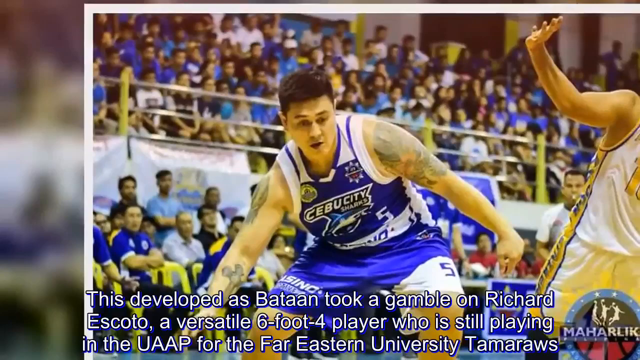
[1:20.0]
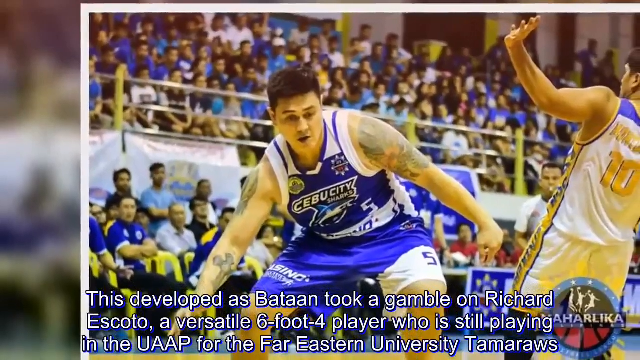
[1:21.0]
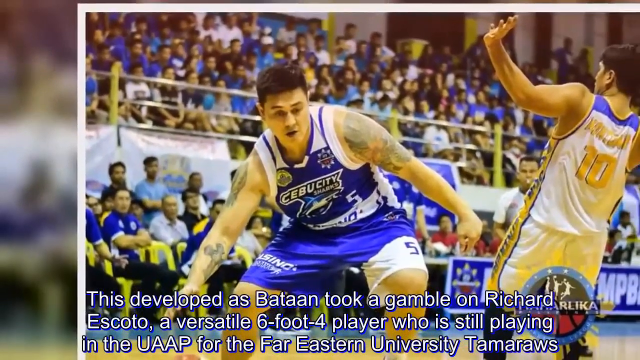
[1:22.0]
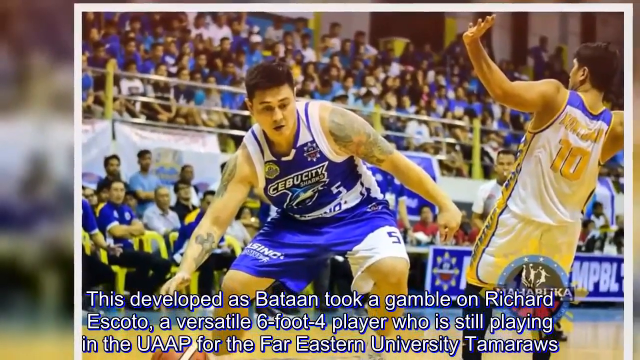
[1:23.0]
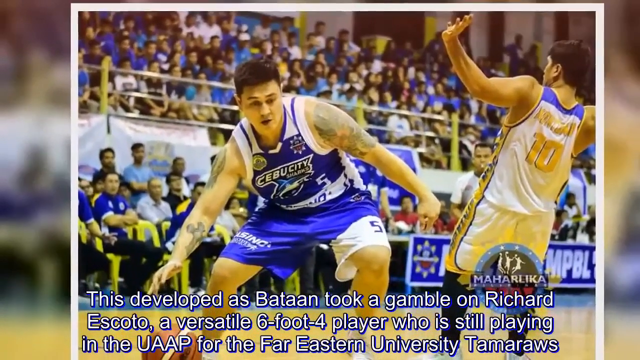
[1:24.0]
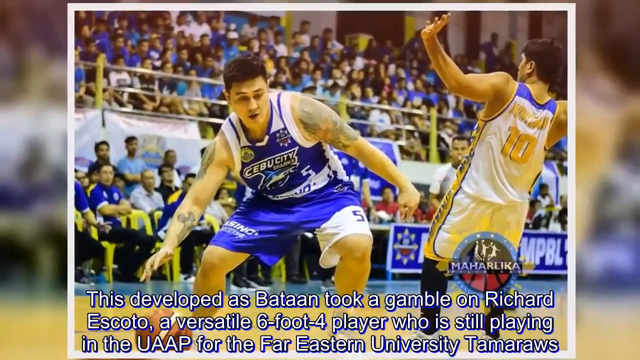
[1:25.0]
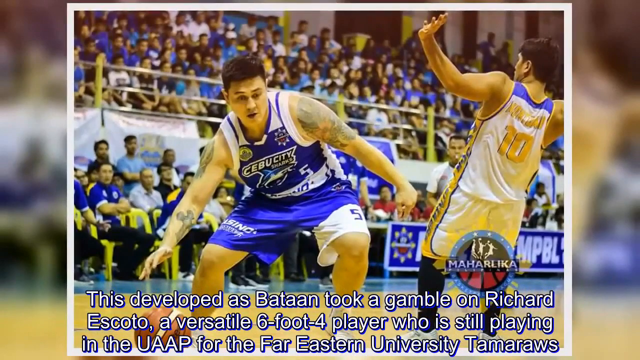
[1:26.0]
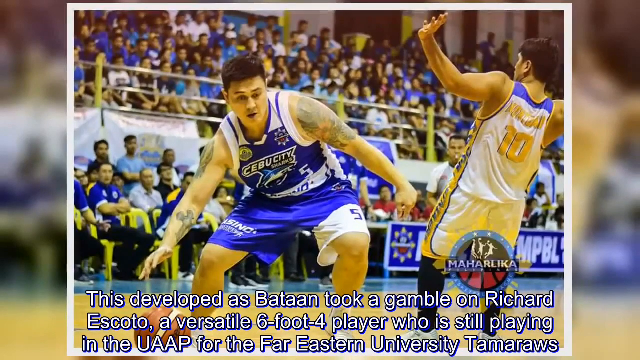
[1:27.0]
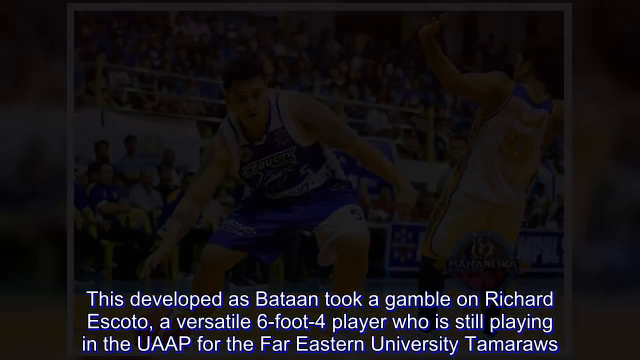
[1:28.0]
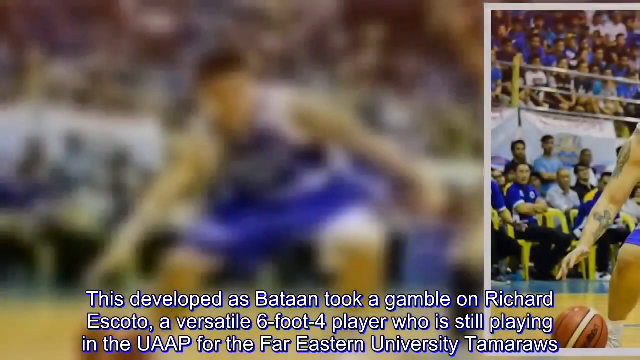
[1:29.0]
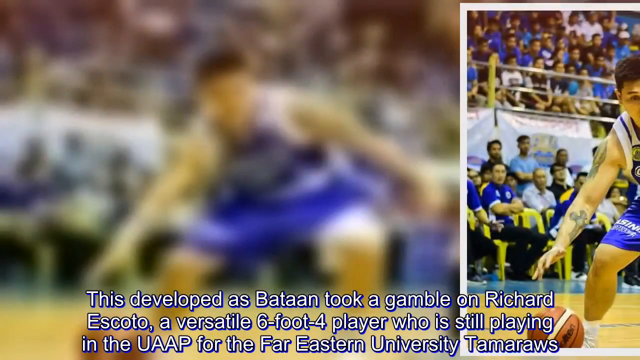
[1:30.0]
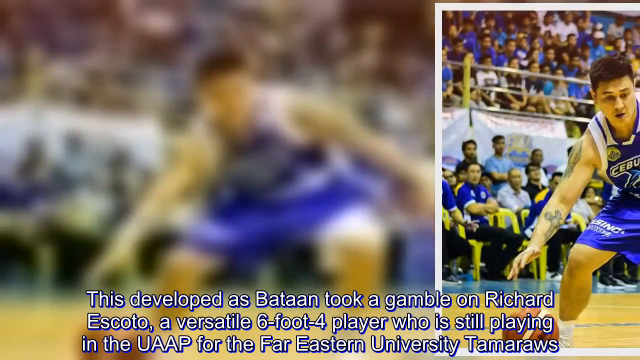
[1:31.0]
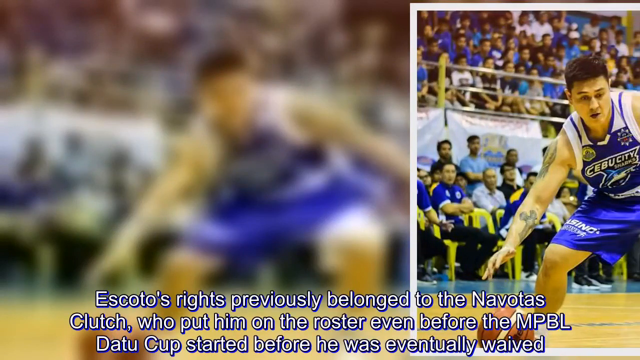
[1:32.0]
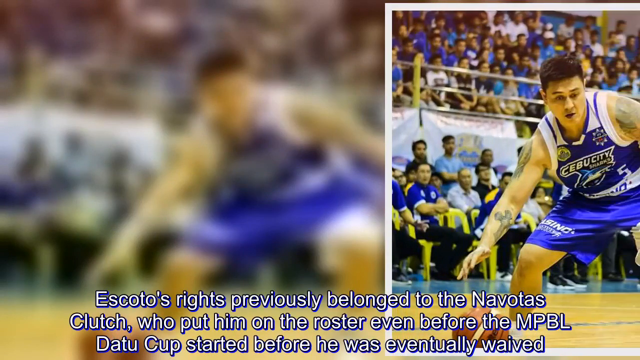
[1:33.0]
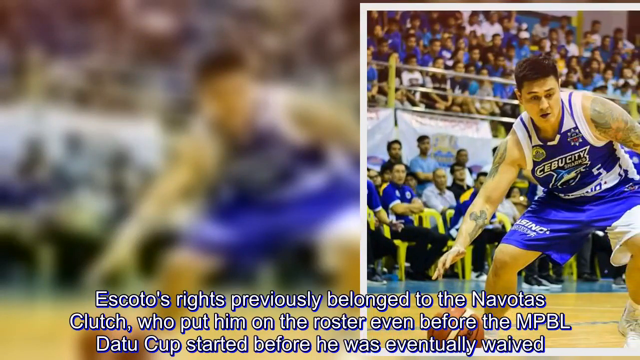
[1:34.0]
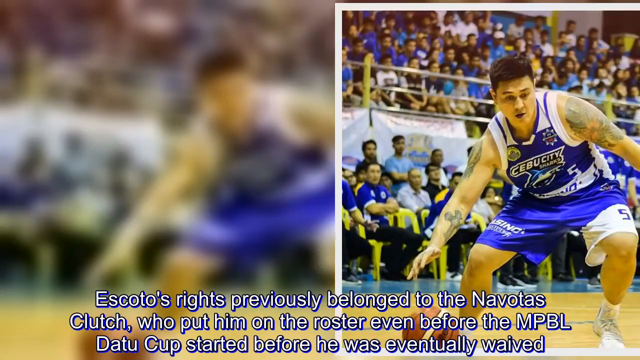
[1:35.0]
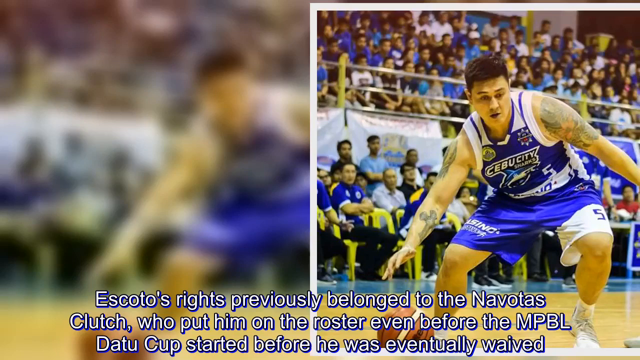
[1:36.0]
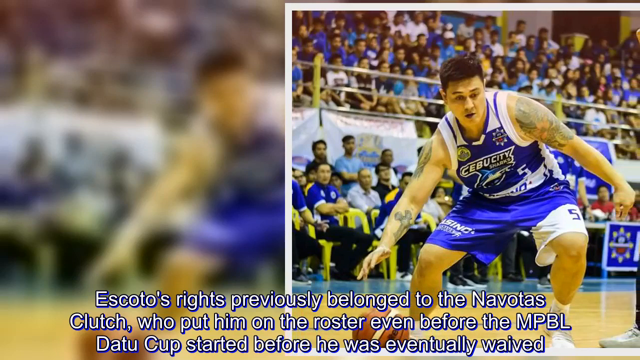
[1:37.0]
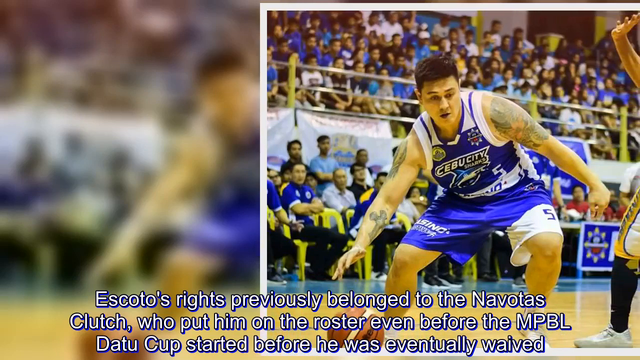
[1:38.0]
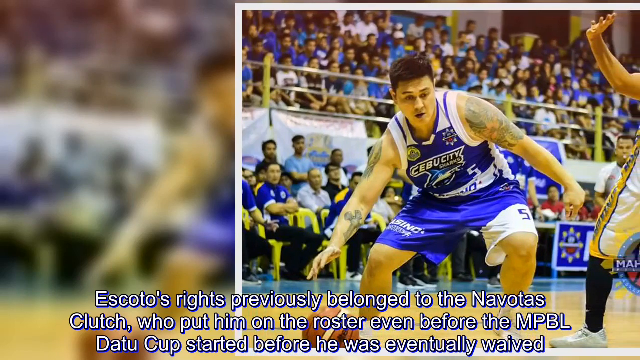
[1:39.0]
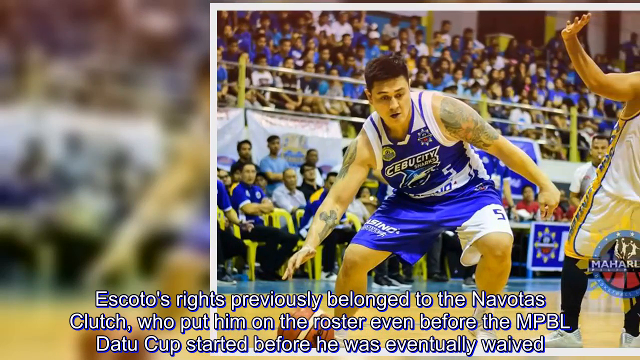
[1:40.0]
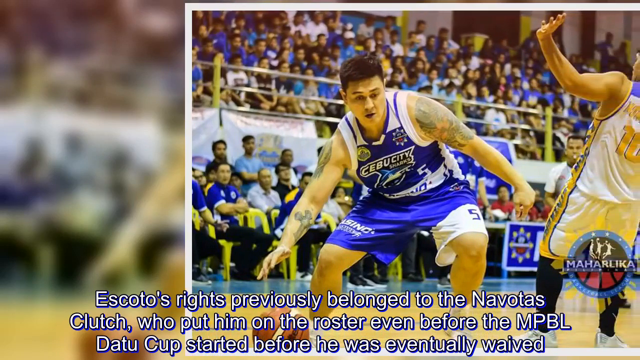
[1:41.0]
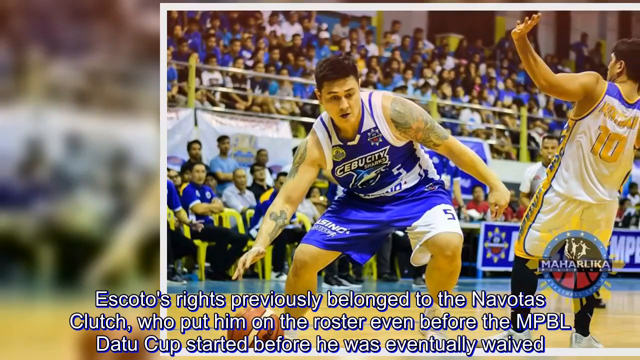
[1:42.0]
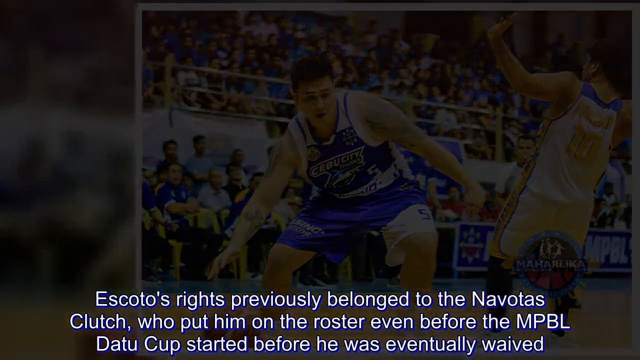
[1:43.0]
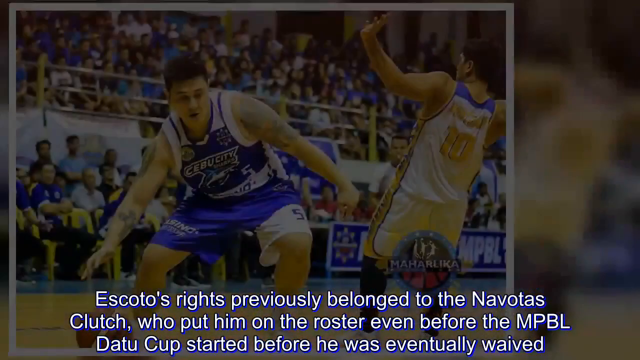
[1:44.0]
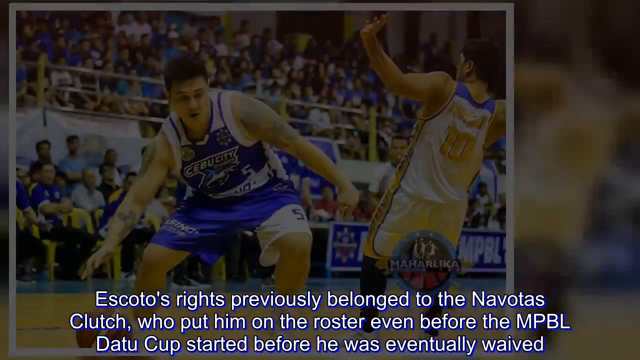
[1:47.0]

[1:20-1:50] The text describes Richard Soto, a versatile 6-foot-5 player, and says Soto's rights previously belonged to another team, which put him on the roster even before a Cup started.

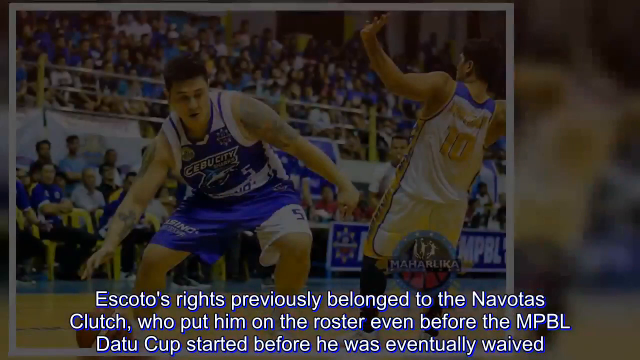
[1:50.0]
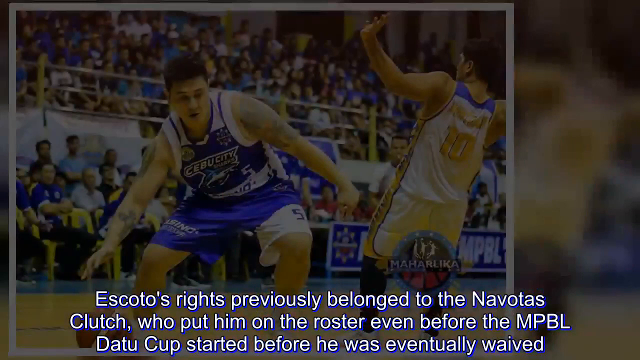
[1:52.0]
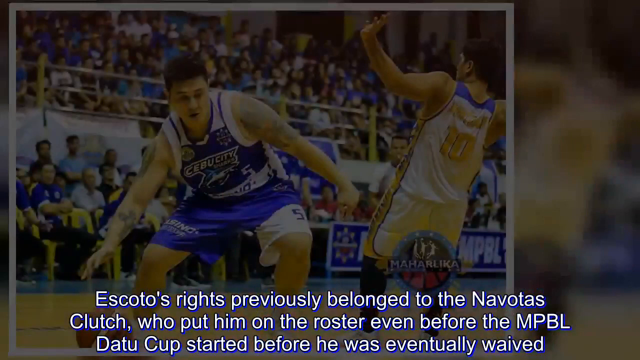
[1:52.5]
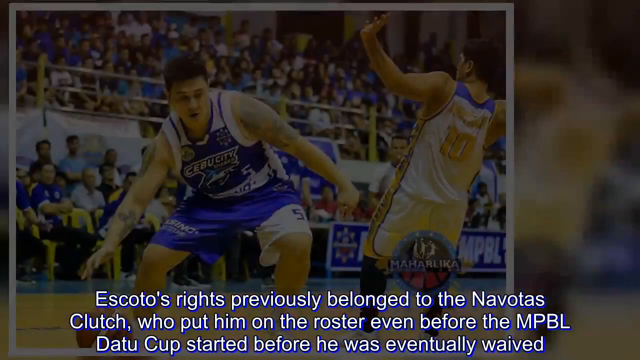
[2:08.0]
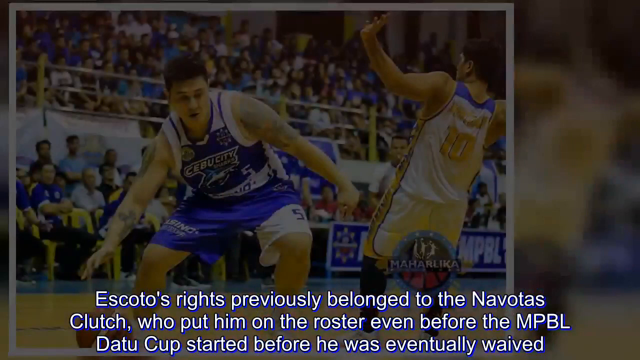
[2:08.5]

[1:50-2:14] The description text continues about the player's rights previously belonging to another team, which put him on the roster before he was eventually let go.